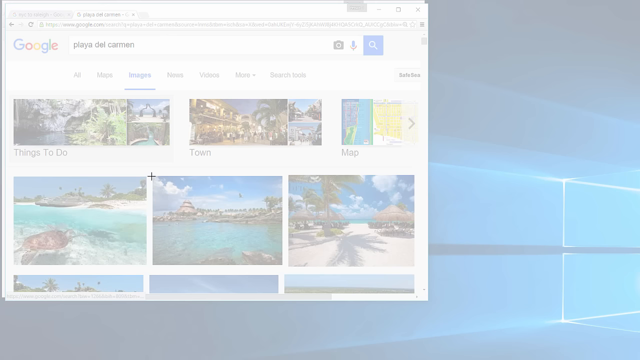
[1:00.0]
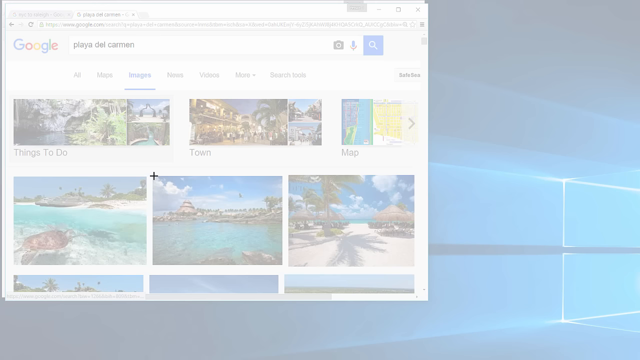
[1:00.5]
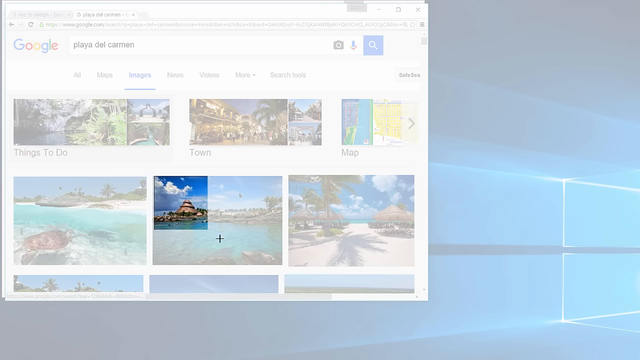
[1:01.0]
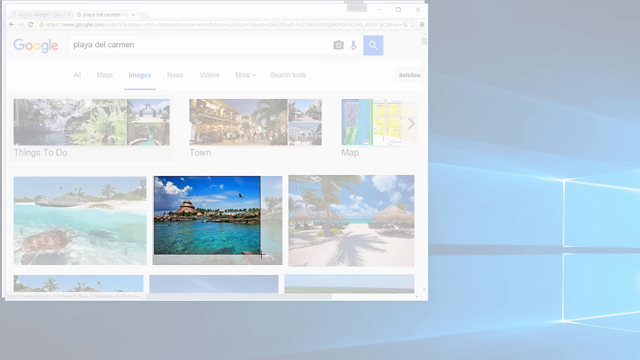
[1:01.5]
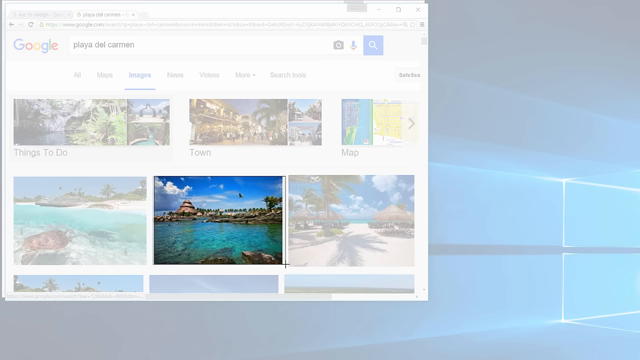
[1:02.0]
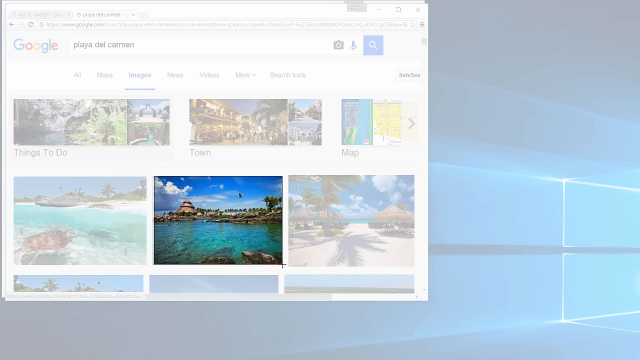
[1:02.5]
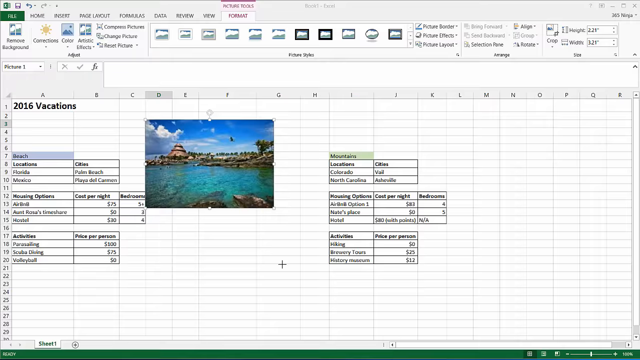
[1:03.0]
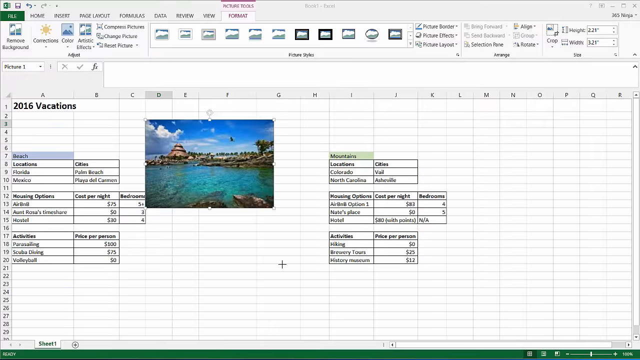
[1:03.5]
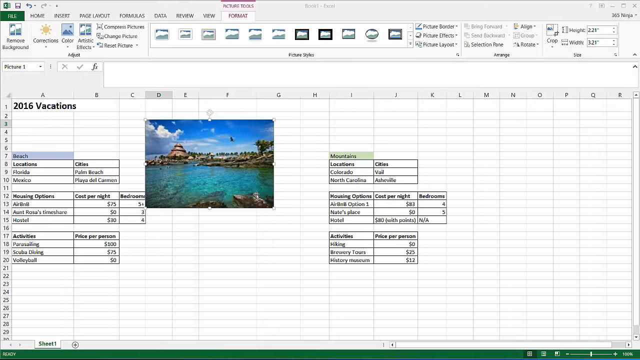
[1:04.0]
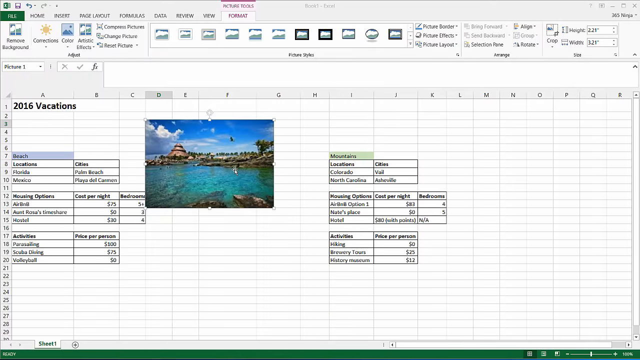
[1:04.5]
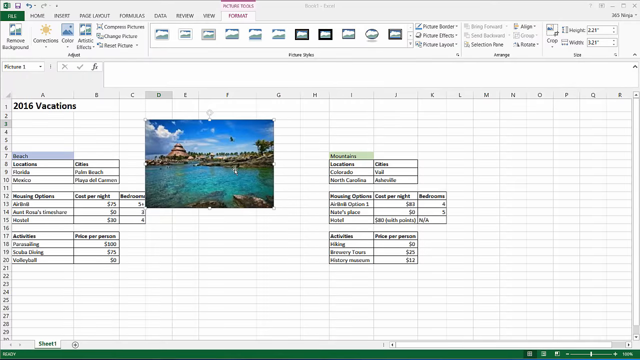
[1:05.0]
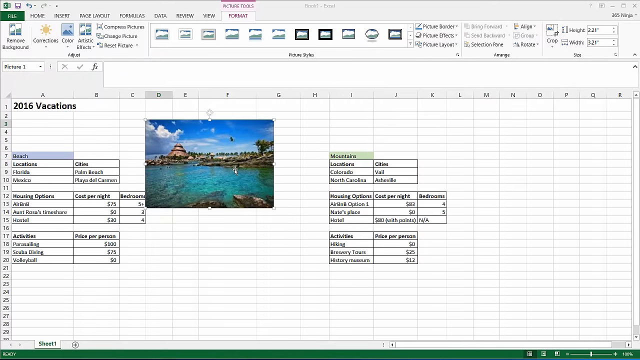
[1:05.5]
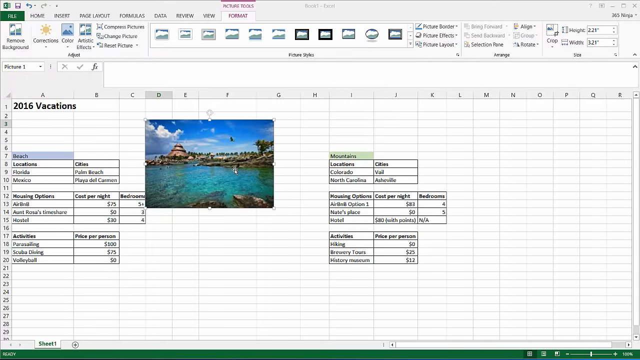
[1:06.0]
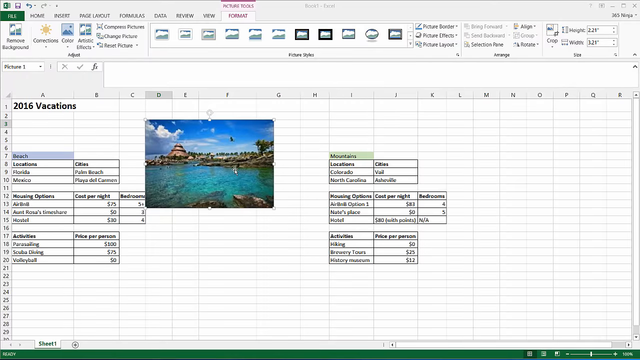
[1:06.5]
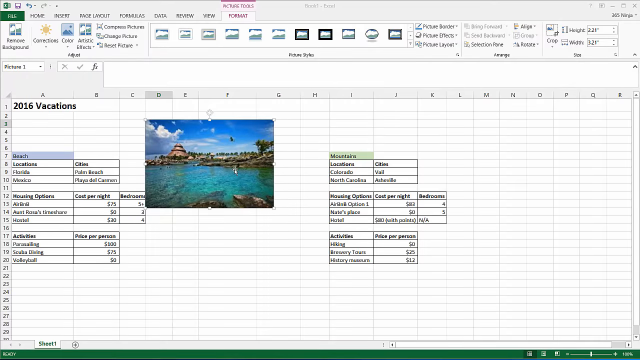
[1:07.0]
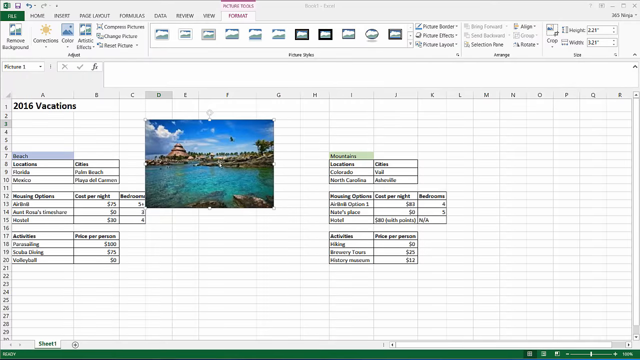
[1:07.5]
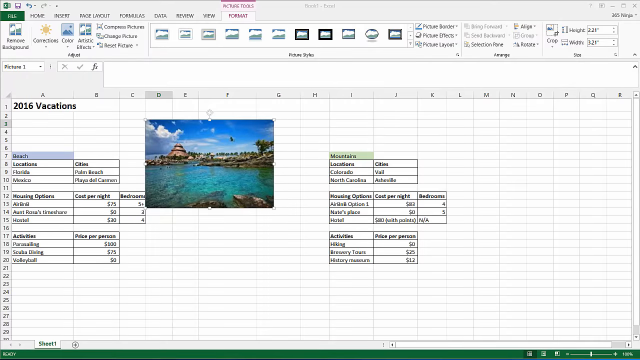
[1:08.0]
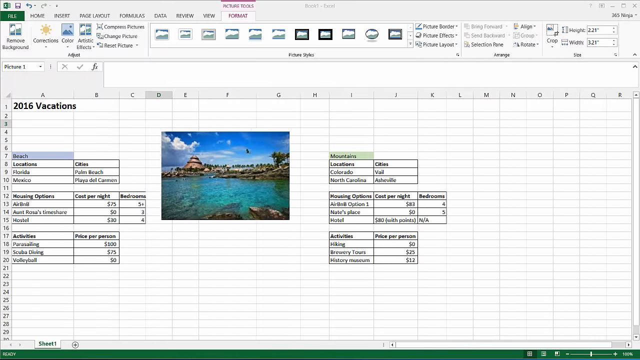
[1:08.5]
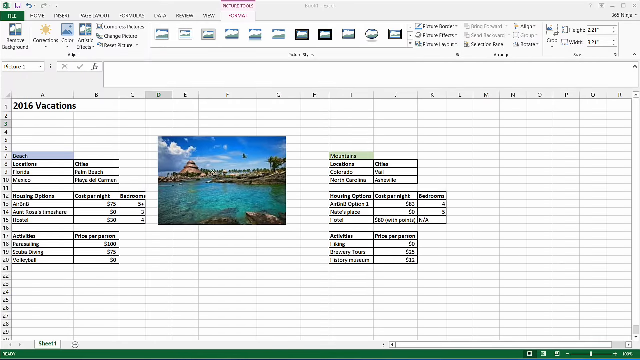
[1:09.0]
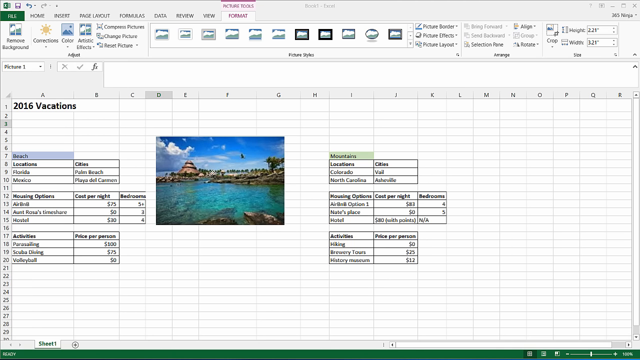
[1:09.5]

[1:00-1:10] She cuts a picture from one of the images she searched earlier and pastes it into the plan on the Excel spreadsheet, apparently to add pictures for each kind of vacation, seemingly a beach picture for the beach vacation and a mountain picture for the mountain vacation. She keeps repeating this, cutting pictures and pasting them next to the corresponding vacation.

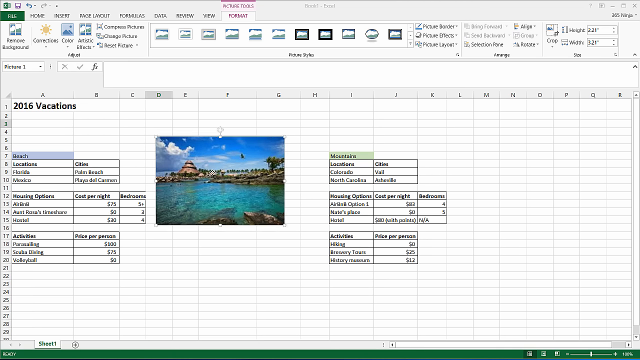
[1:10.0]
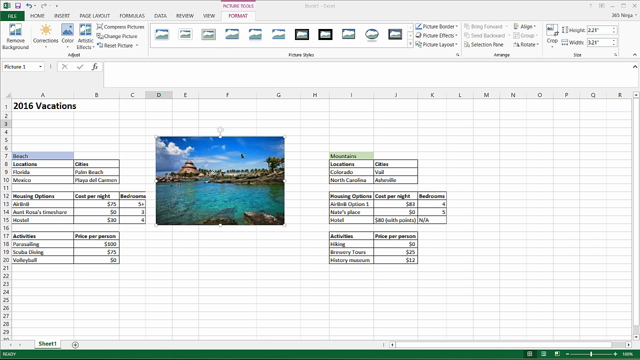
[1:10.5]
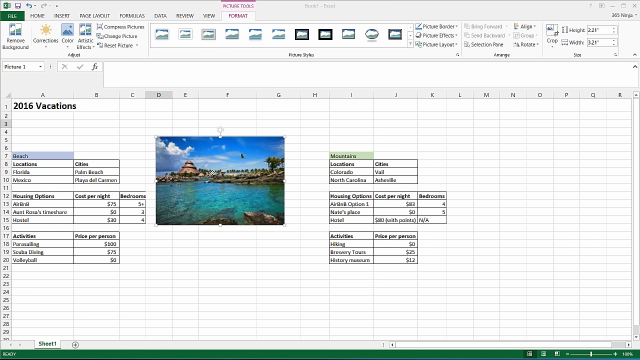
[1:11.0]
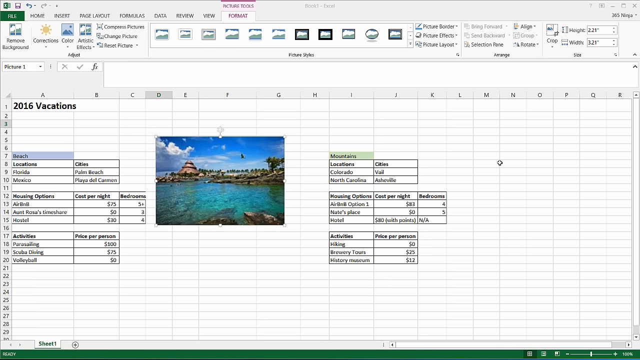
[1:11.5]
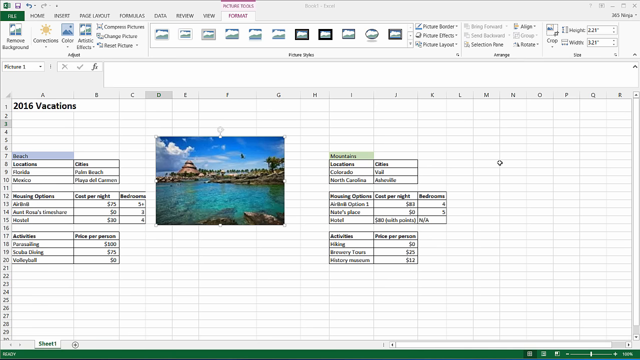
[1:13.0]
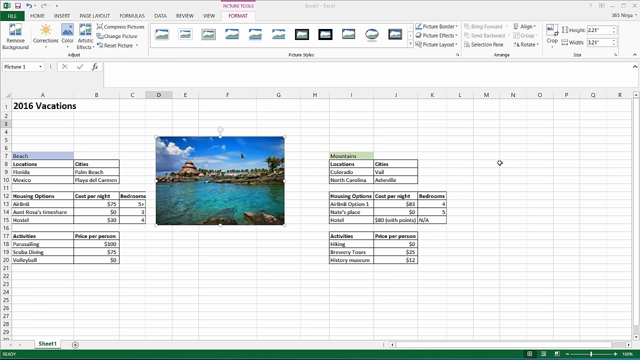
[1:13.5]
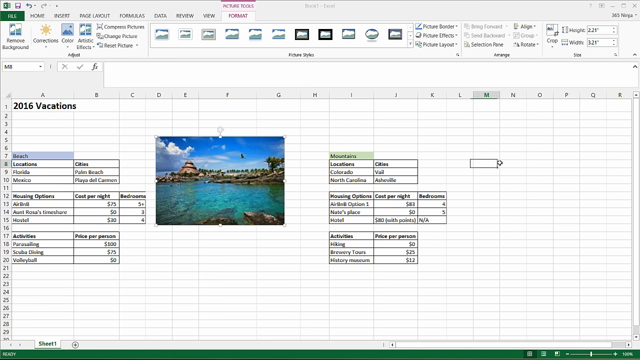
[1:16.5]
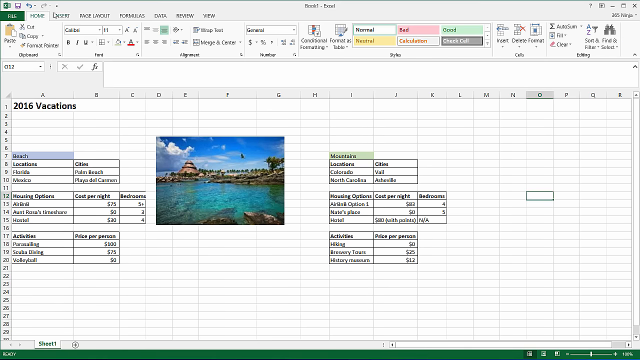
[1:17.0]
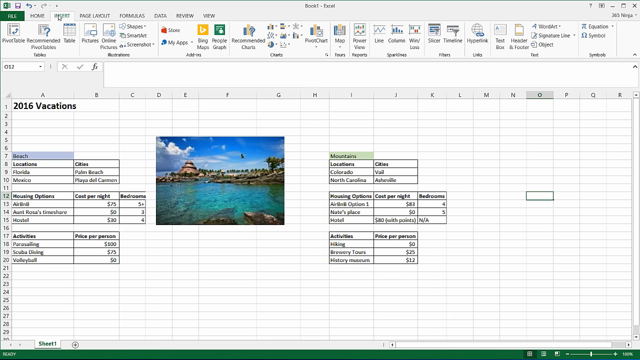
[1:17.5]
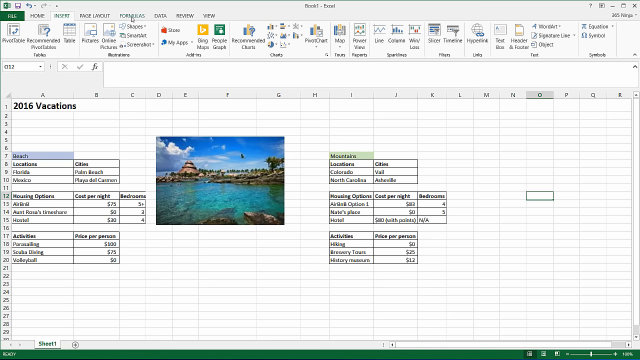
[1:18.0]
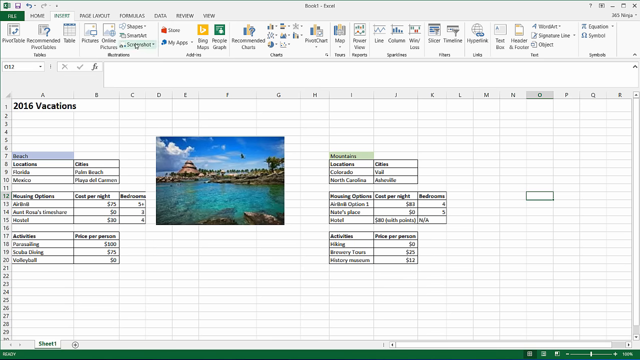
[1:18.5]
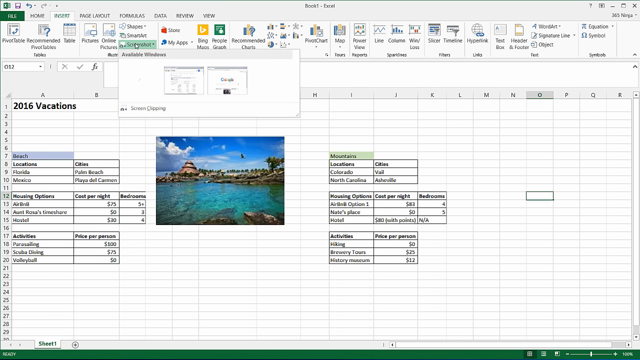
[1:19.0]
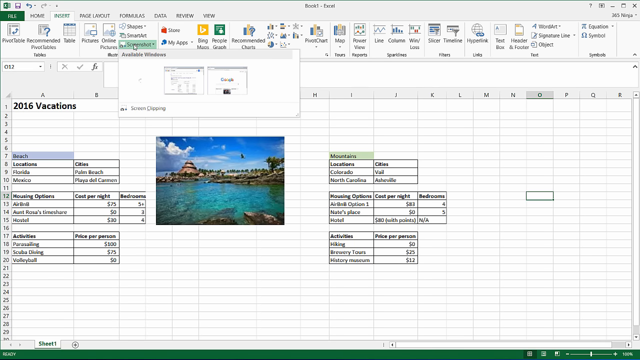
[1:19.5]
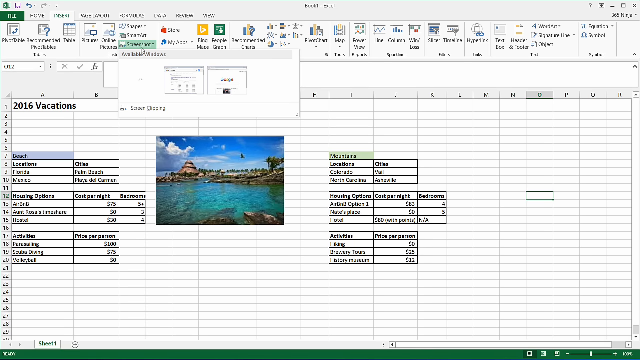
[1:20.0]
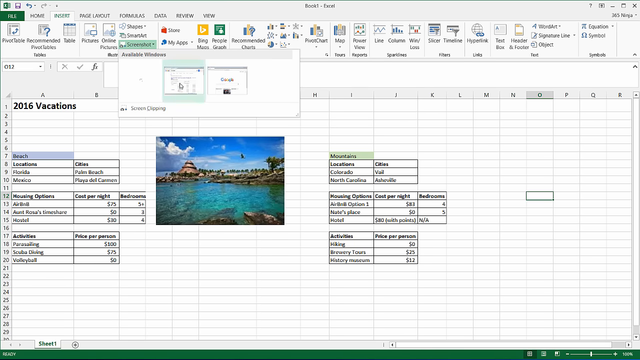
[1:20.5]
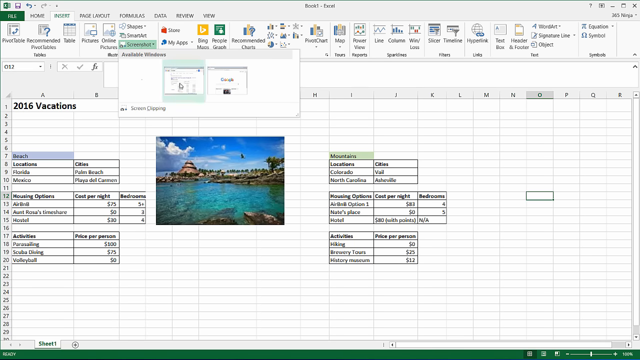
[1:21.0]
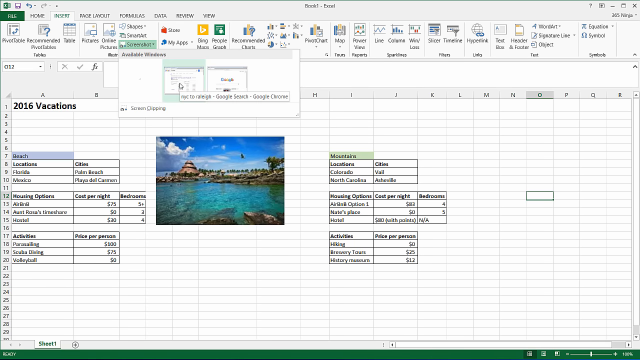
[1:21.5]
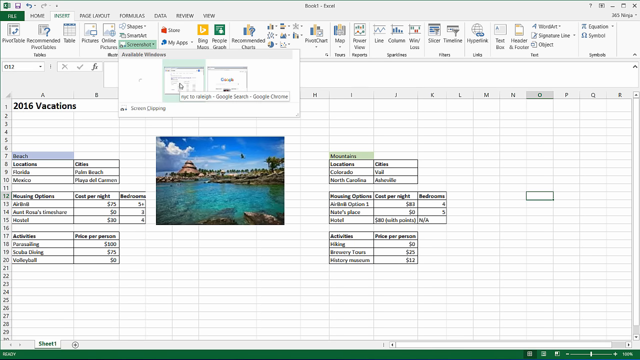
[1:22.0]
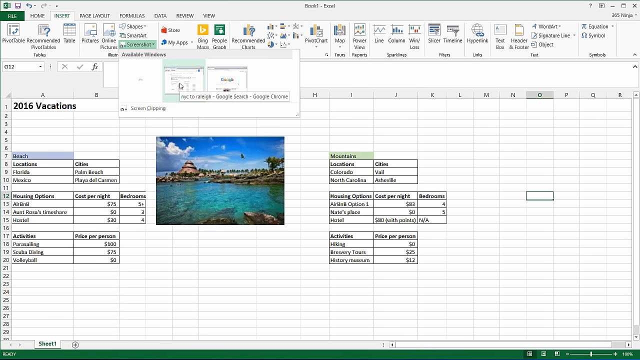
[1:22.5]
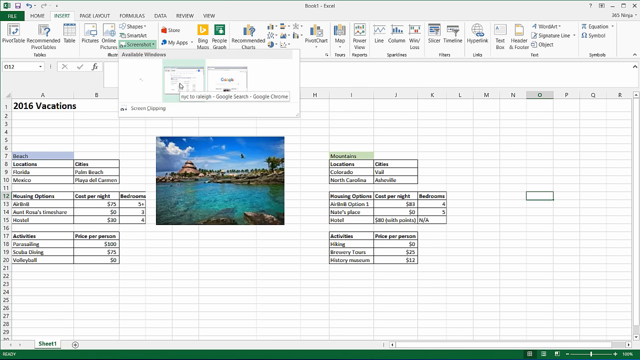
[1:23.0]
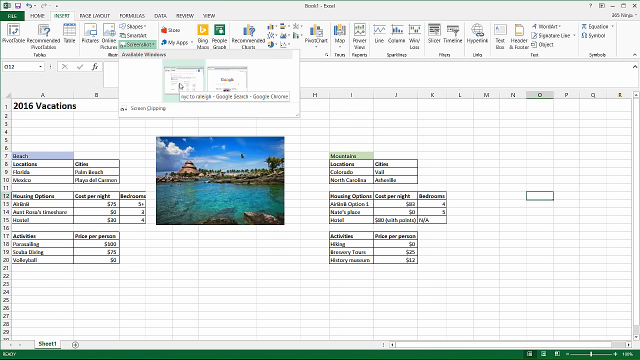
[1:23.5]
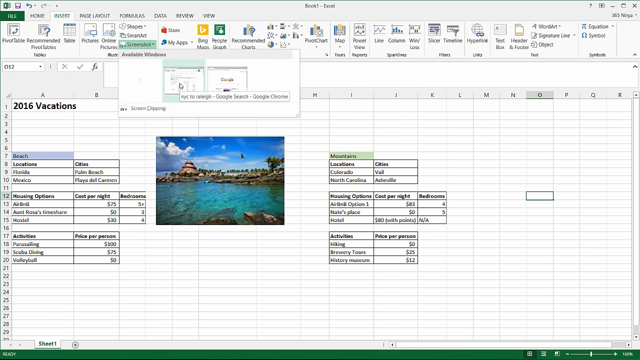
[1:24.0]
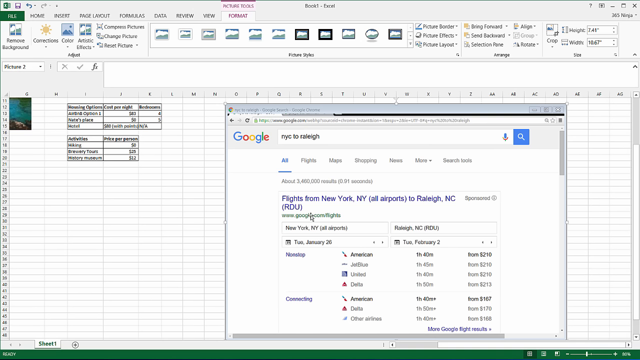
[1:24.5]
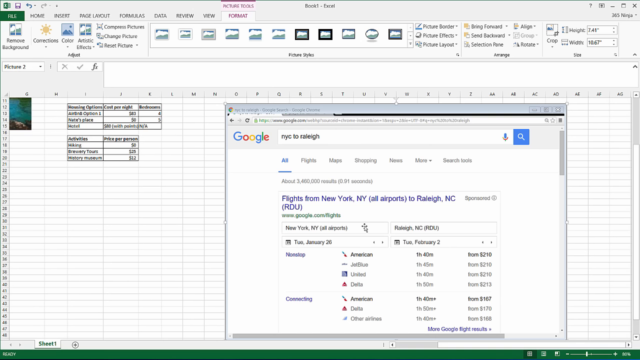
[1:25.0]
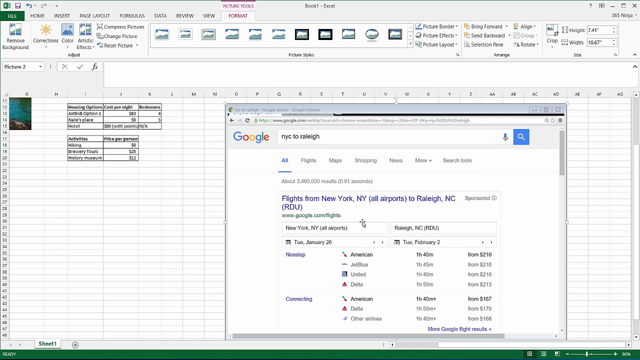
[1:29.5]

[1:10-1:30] The spreadsheet shows the beach locations Florida and Mexico, with Palm Beach for Florida and Playa del Carmen for Mexico, and a picture has been pasted for Playa del Carmen. She then moves on to looking up flights to those places, their times, and their costs. The mountain locations, Colorado and North Carolina, have pictures and activities on the side, along with flight plans and flight costs. She keeps switching between the Excel spreadsheet and Google to research flight times, flights, and pictures for the vacations.